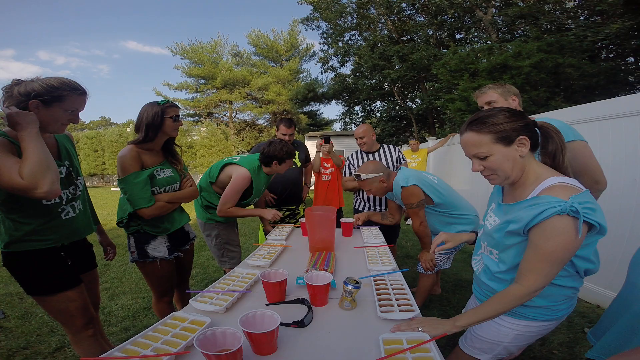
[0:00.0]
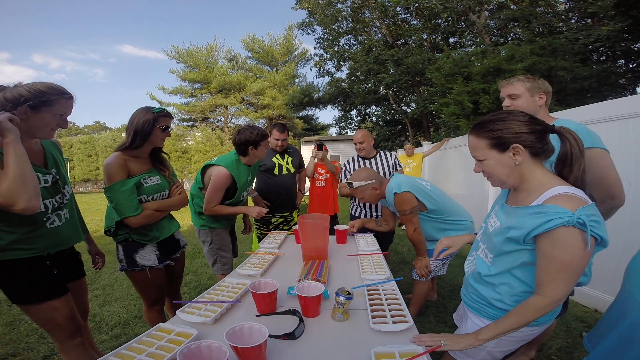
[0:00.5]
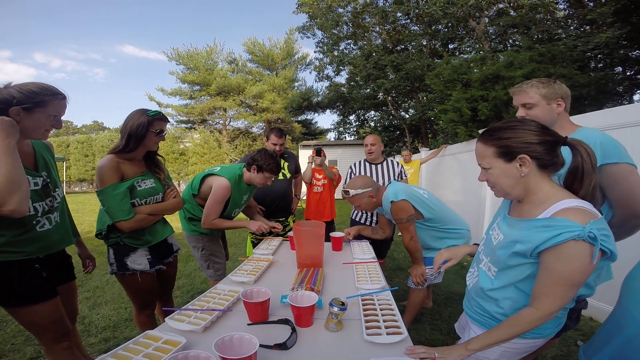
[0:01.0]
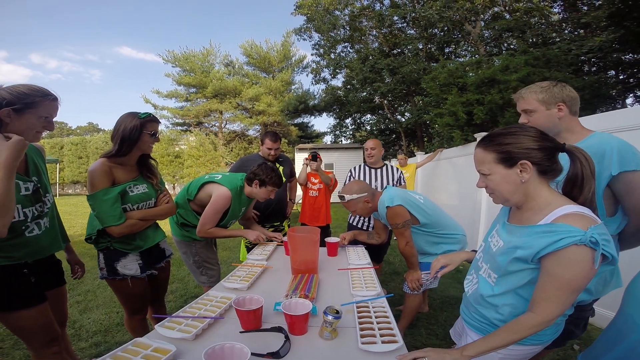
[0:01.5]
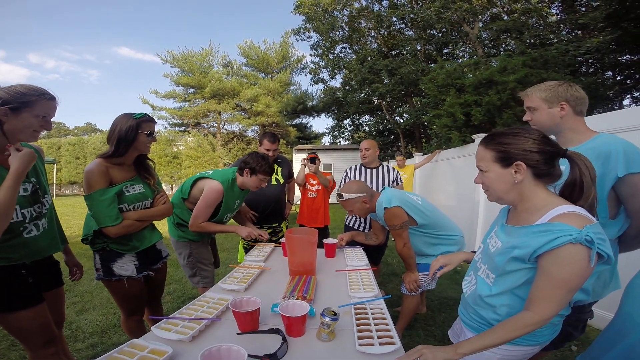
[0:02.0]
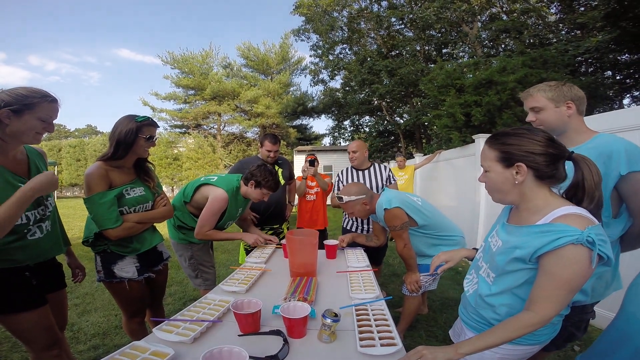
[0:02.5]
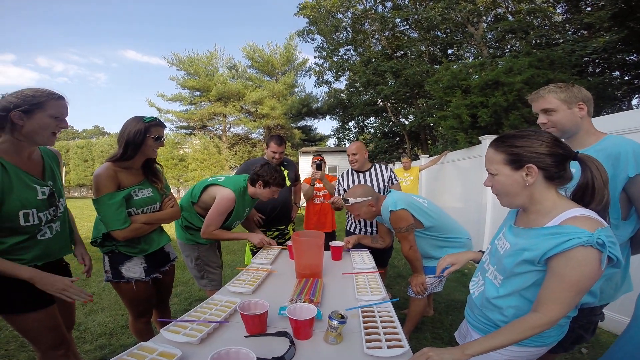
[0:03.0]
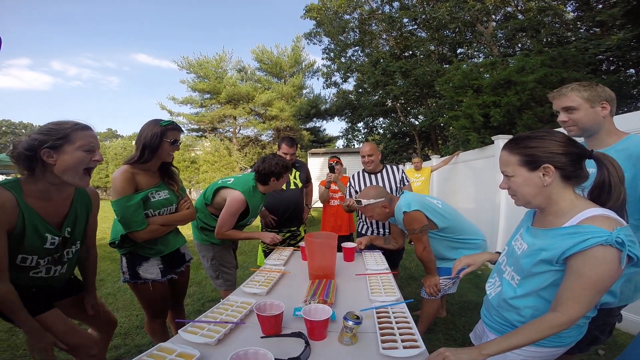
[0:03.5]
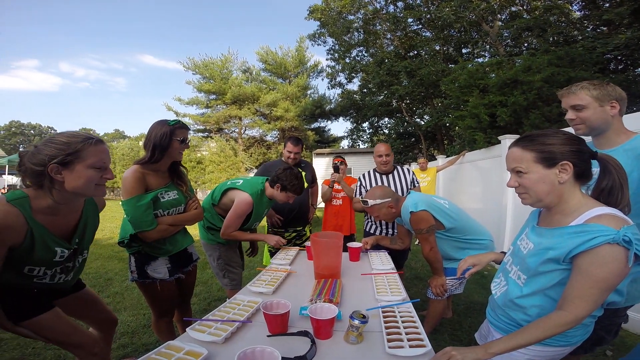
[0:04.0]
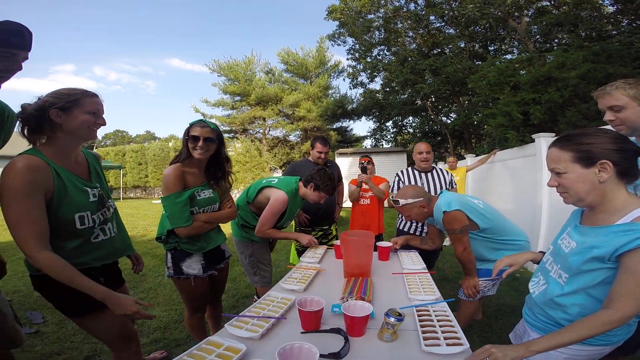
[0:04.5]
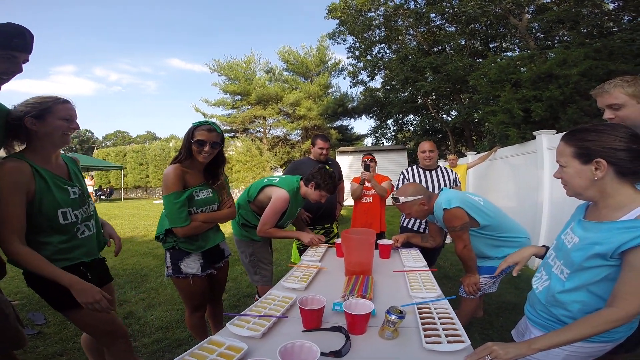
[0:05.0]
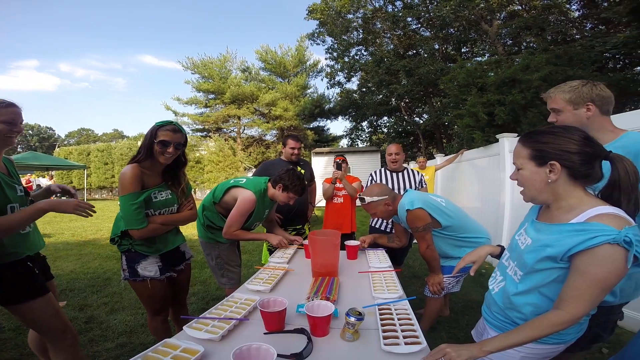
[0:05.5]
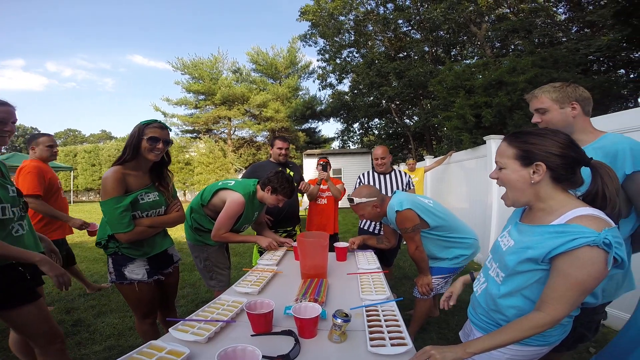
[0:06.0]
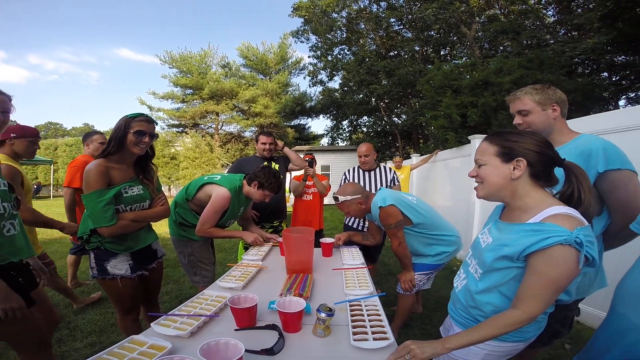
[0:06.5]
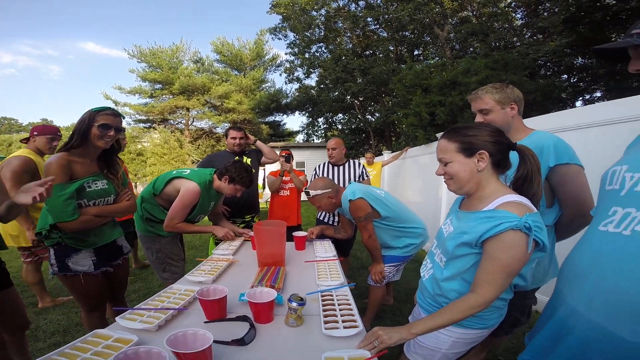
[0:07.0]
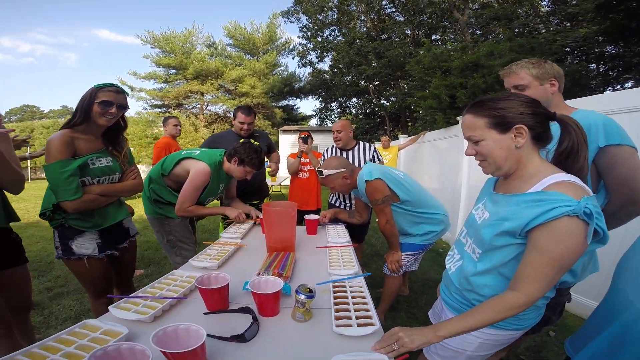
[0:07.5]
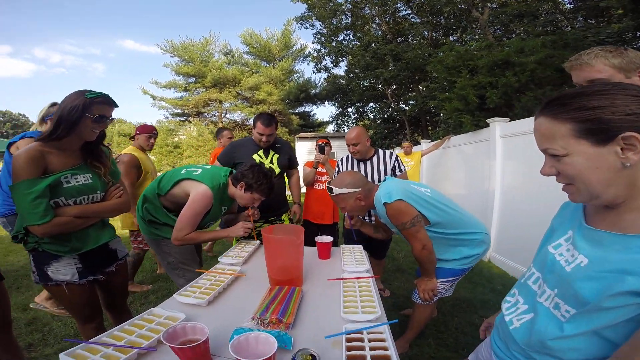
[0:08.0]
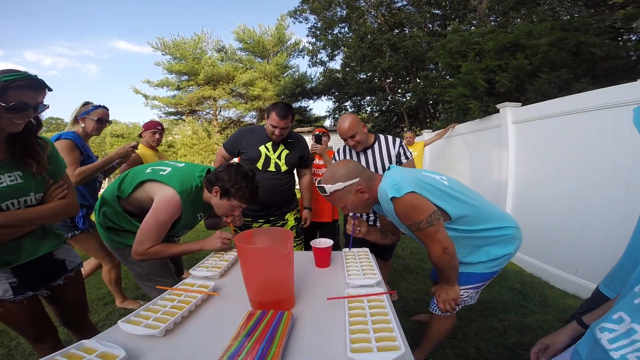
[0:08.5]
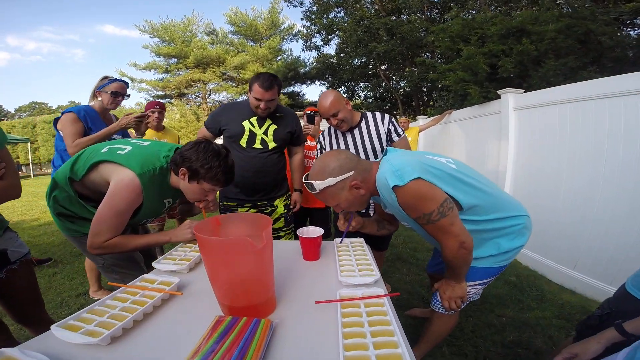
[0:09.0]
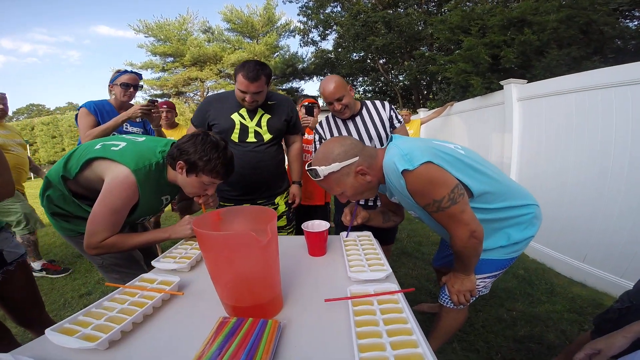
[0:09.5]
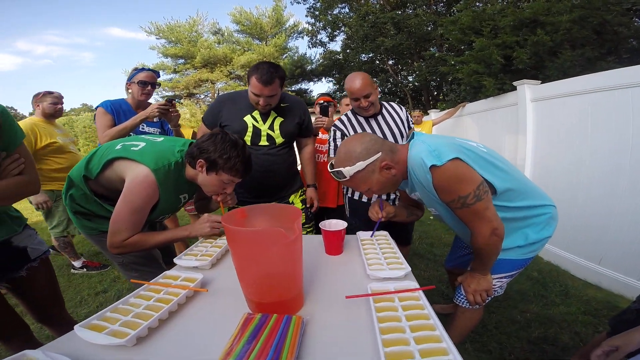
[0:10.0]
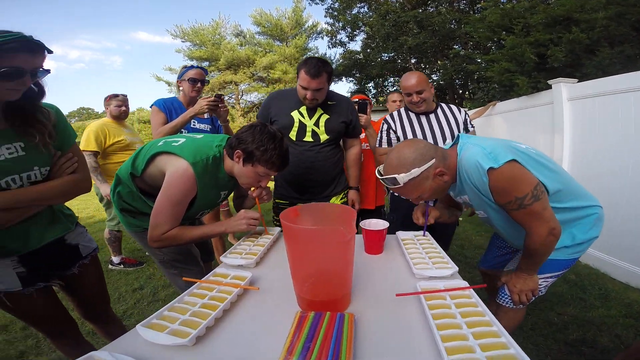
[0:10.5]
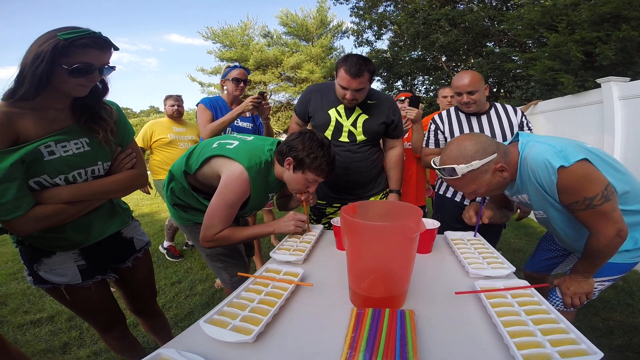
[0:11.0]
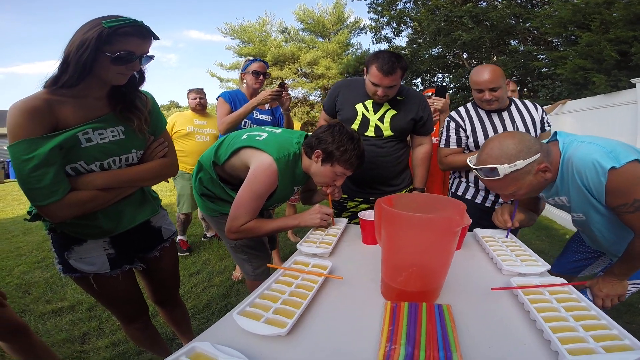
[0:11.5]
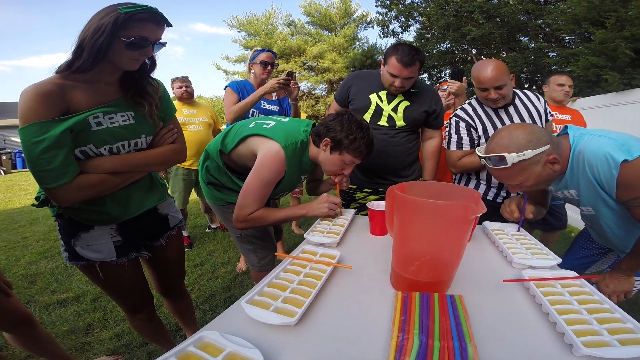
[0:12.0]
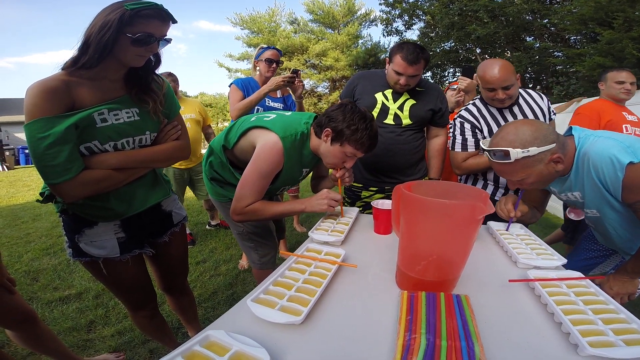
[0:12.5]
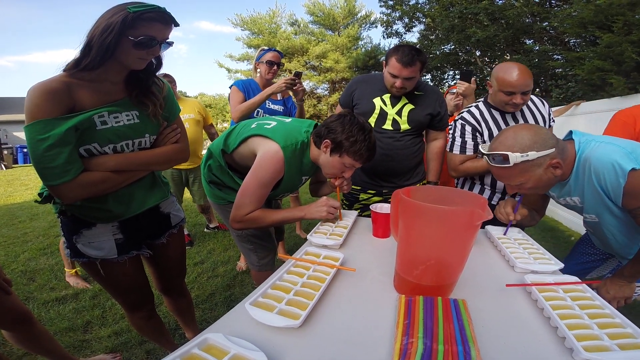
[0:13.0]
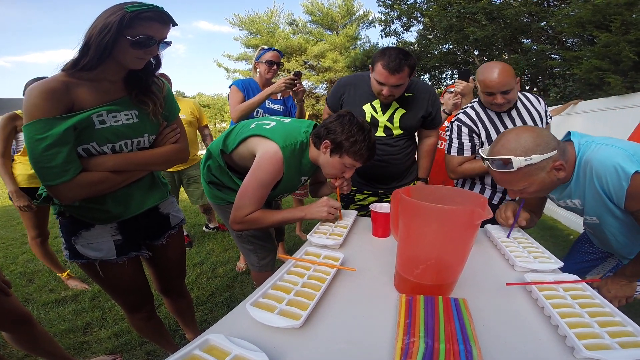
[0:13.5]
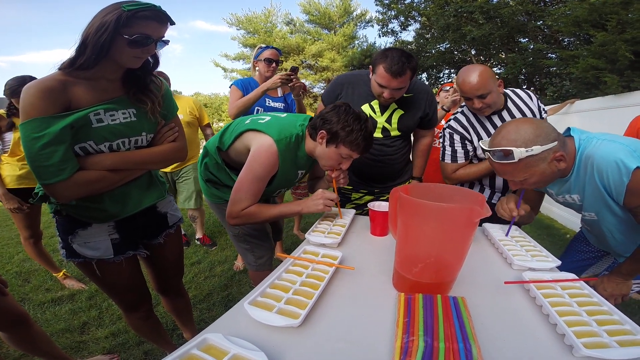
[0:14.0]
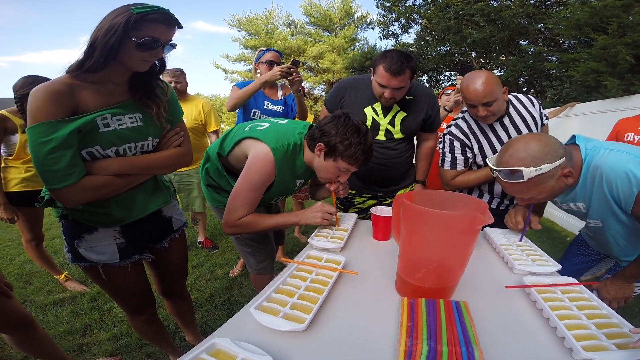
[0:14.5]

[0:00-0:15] On a sunny day outdoors, there is a long table with a white tablecloth, with a team on each side. The participants look like relatively young Caucasian people. The people on the left wear green T-shirts and the people on the right wear light blue T-shirts, with white text that says something like "Beer Olympics". In the background is a bald person in a black and white vertically striped referee shirt. The teams are taking turns: two young men, one on each team on the far side of the table, are bending over and apparently drinking beer from ice cube trays with straws. There seem to be three or four people on each team, and each person at the table has an ice cube tray in front of them, but most are just standing around watching the two compete. On the table there are also some red solo cups, a pink plastic pitcher and a whole bunch of colored straws. Some spectators are watching and people are taking pictures. A kind of heavyset guy in a black T-shirt with a sort of lime green New York Yankees logo on the front leans close, as though he is a referee or something. The young people appear to be taking part in some kind of outdoor beer-drinking event.